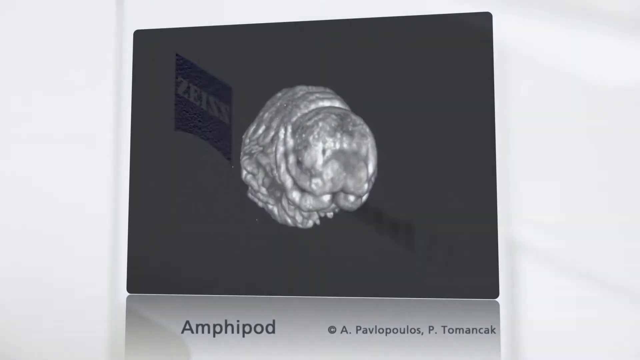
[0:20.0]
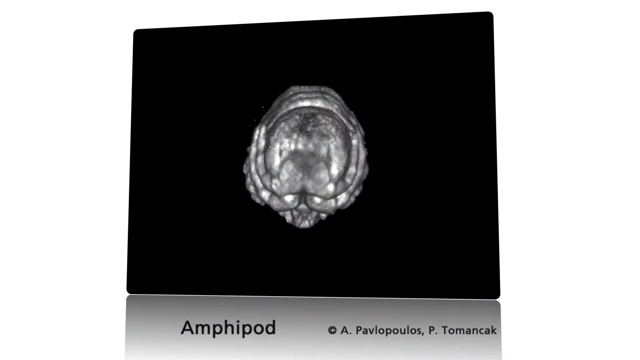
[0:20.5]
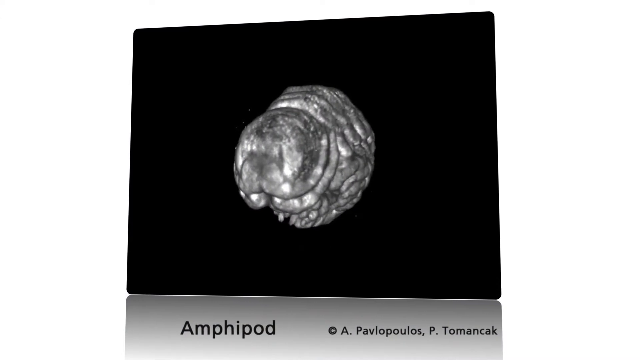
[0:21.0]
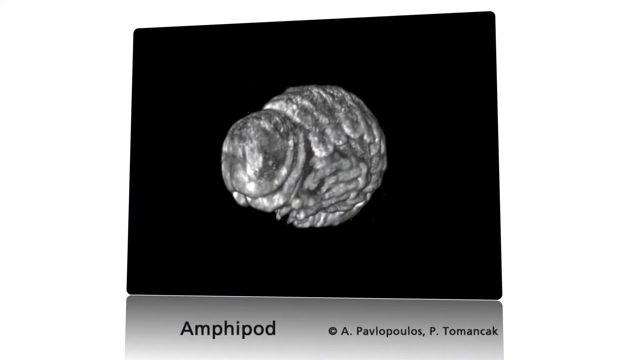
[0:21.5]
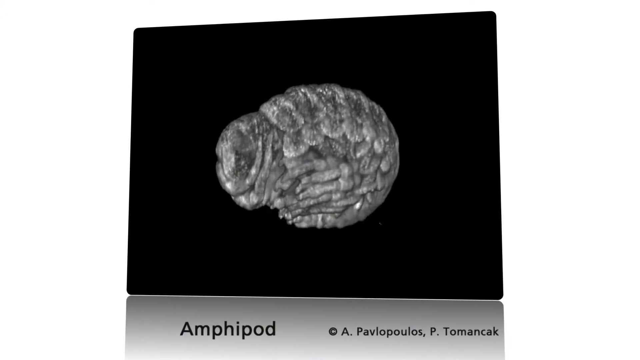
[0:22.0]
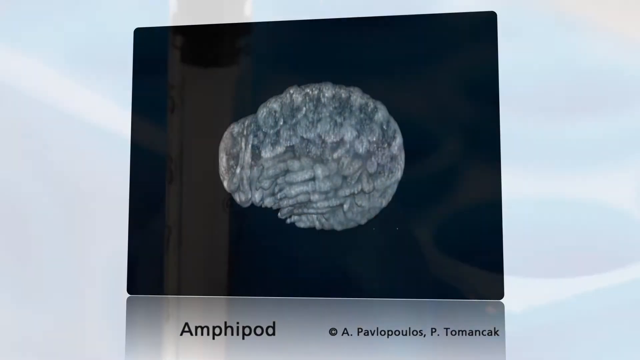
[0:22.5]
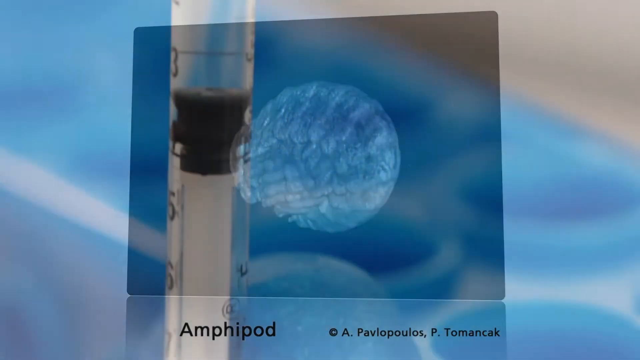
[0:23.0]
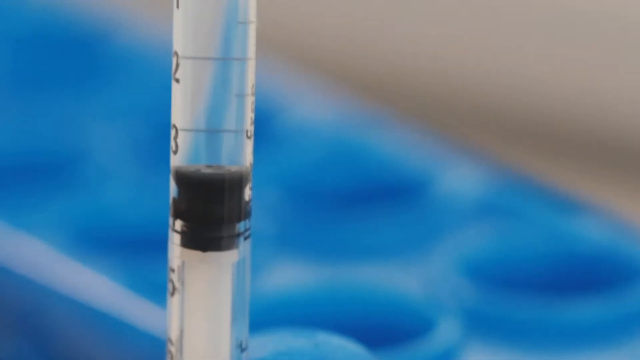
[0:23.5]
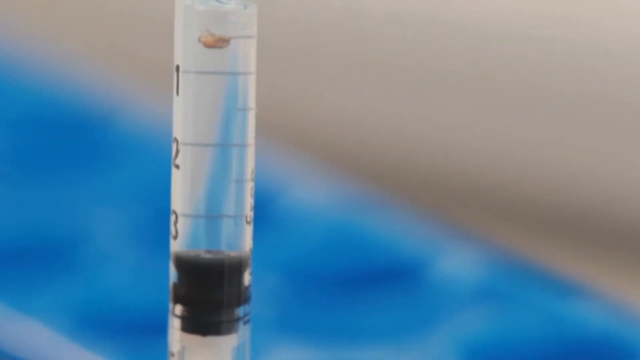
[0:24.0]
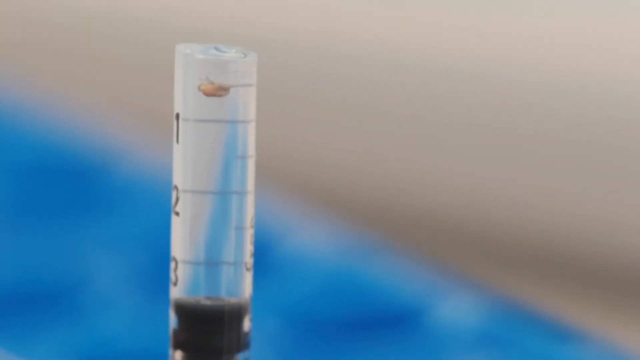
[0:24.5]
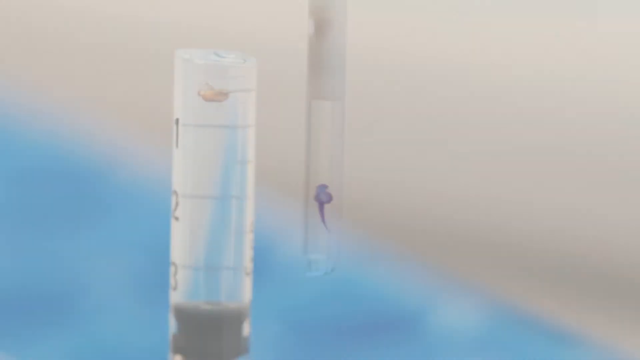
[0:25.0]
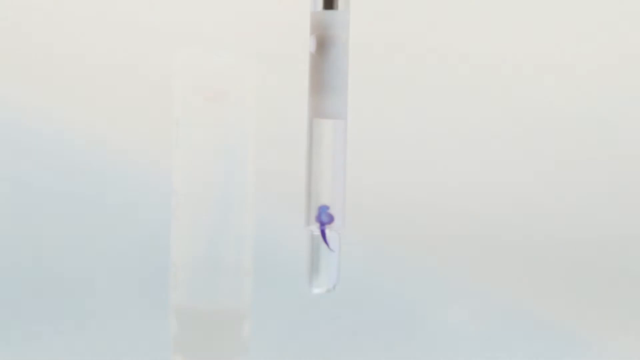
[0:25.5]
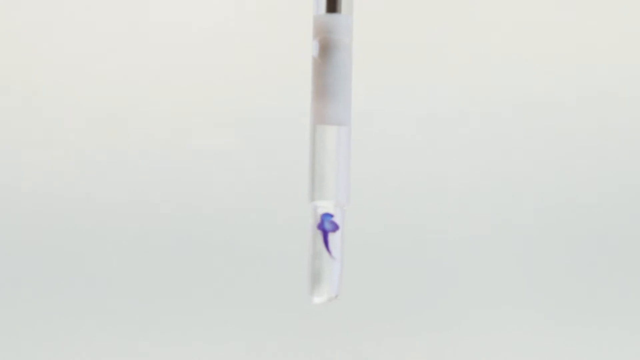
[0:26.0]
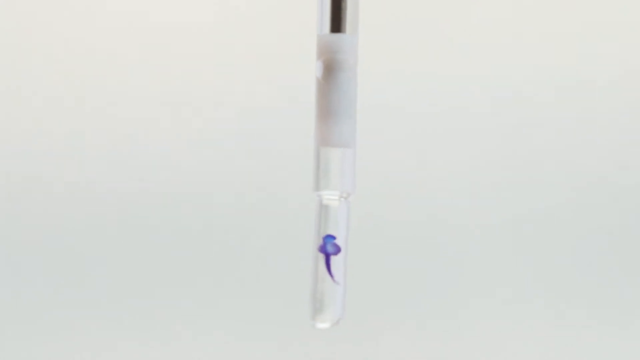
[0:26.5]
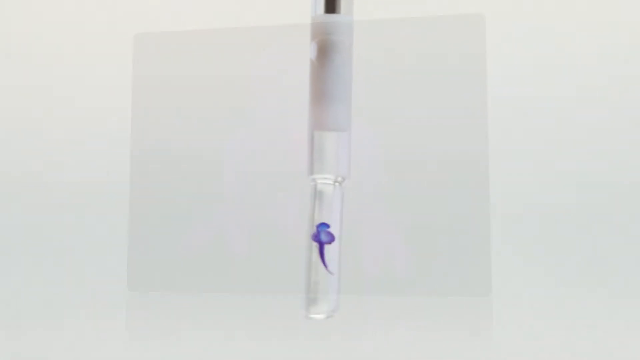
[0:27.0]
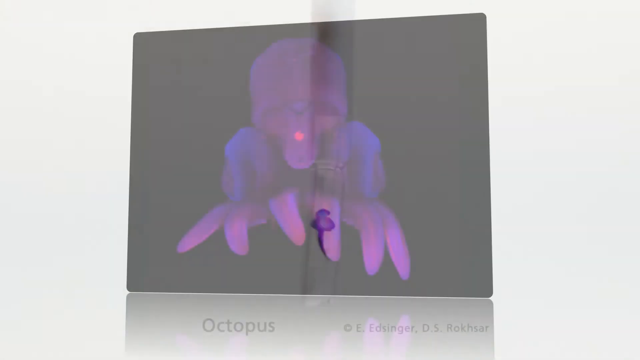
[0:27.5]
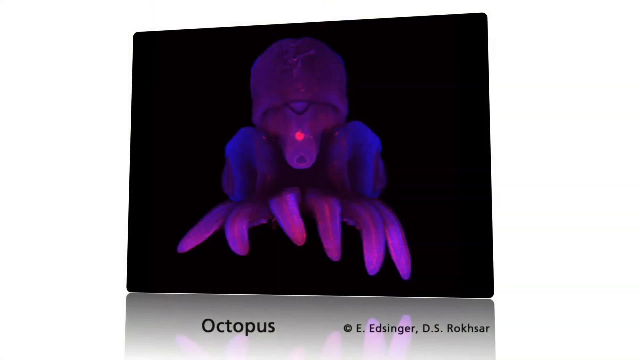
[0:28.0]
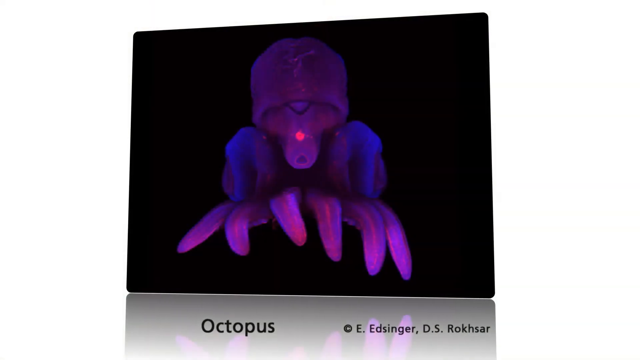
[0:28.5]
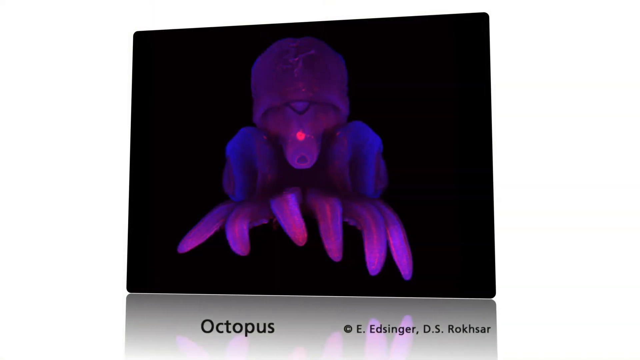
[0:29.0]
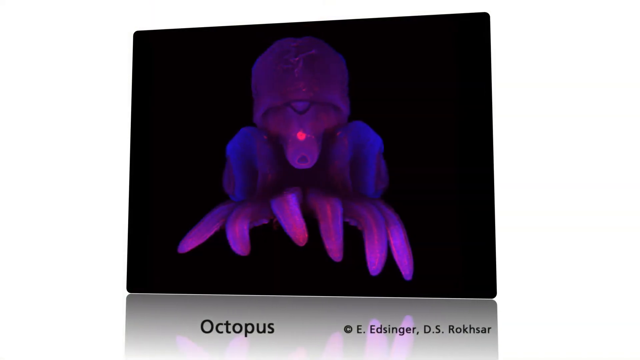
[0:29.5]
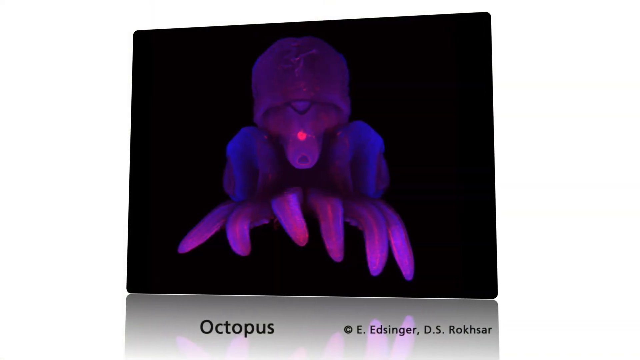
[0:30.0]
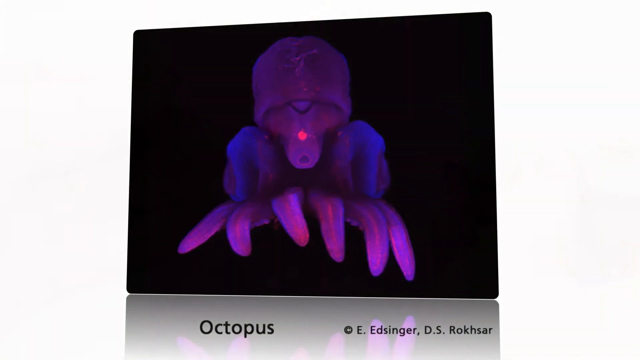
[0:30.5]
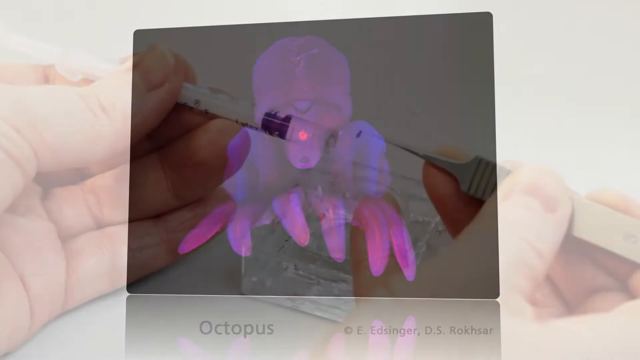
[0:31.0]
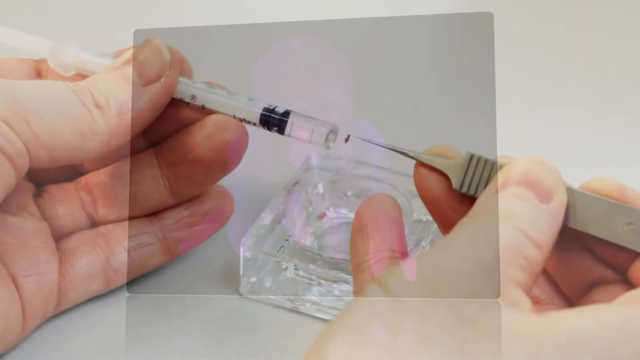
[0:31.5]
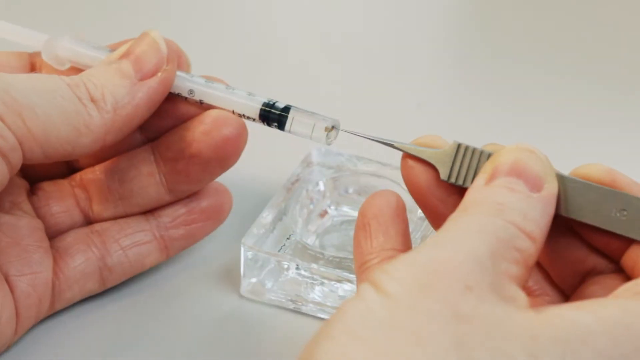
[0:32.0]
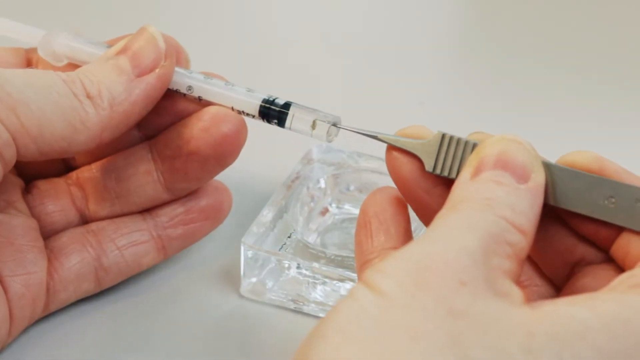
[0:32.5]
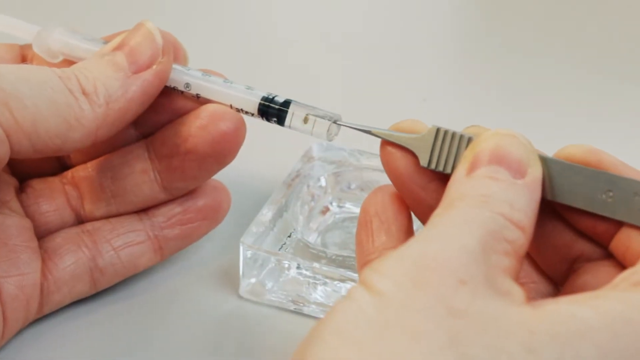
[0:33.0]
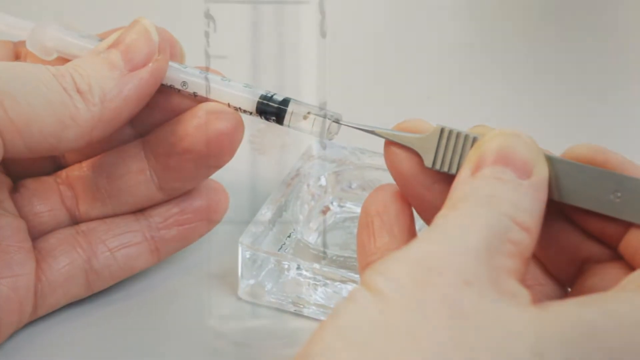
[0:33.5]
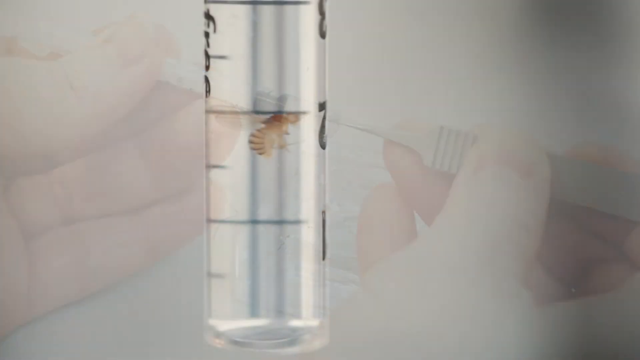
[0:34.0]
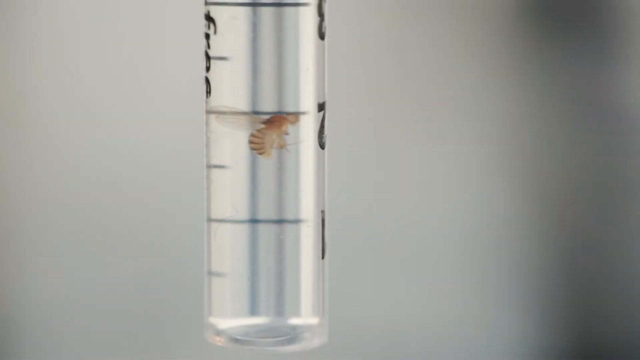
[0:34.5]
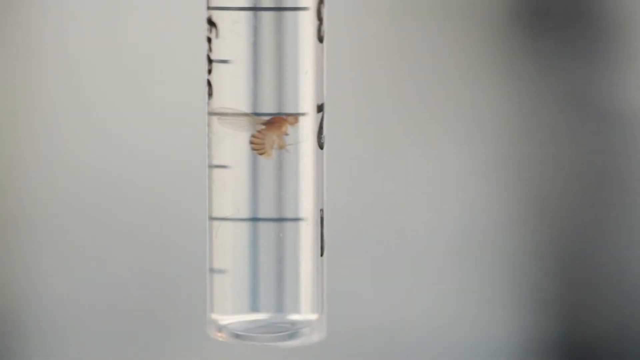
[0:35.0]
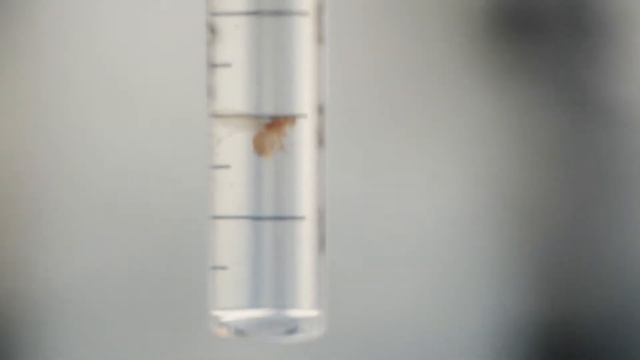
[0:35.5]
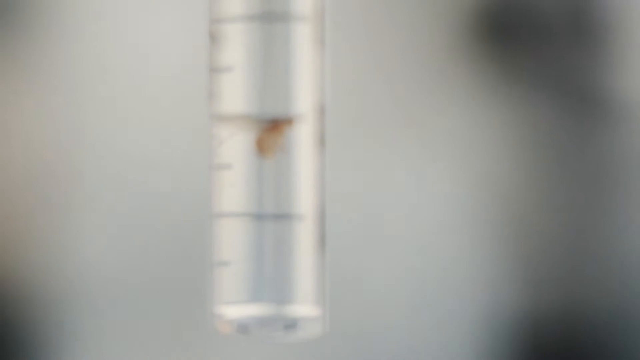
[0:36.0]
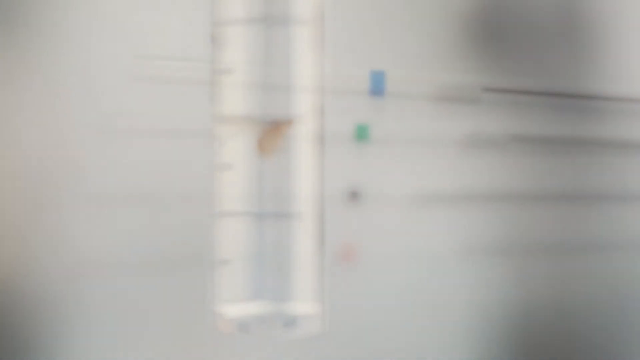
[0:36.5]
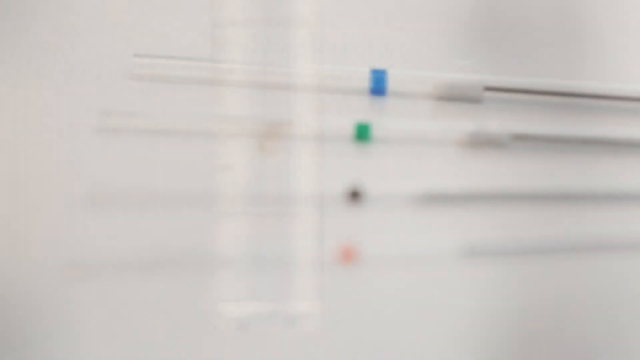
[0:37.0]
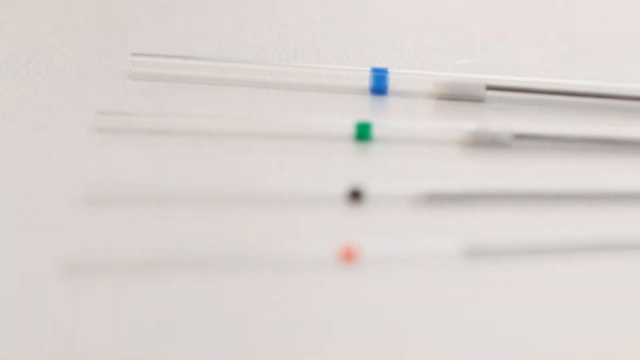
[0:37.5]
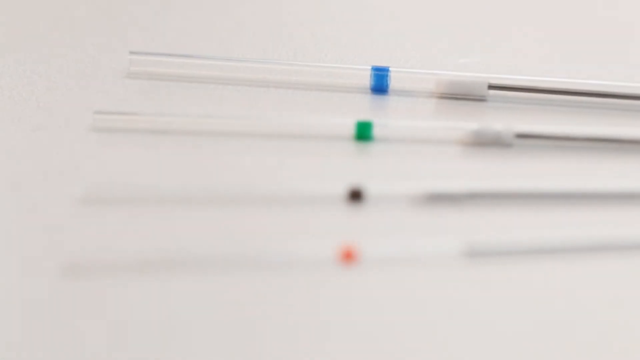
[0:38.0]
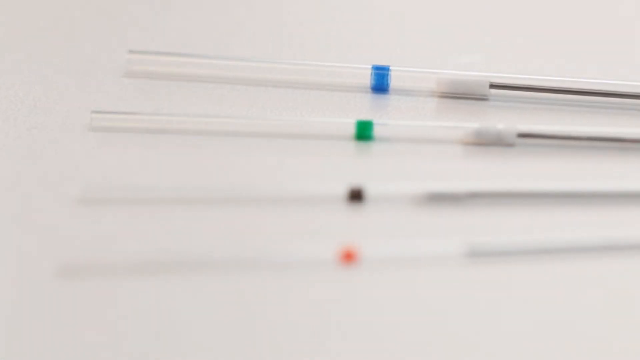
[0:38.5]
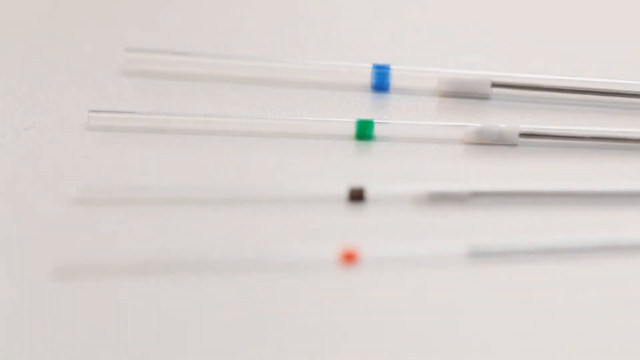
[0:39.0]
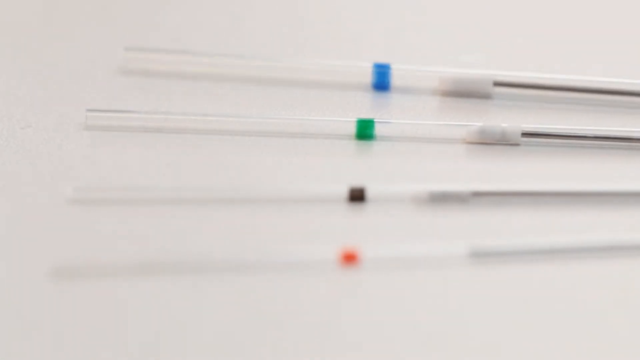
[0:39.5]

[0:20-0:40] On the black background, a whitish-gray circular figure rotates from right to left; it is hard to make out what it is, but it kind of has the shape of a brain. The scene then enters a lab of some sort, with a white table in the background. On the left is a plastic vial marked with the numbers 1, 2 and 3 from top to bottom, and to its right is a thinner tube of some sort. Then everything else disappears and only the tube is shown, in a very zoomed-in view. It has a little purple spot in its center, and at the bottom it is kind of shaking left to right very quickly. The video transitions to a white background with a large black square. In the center of the square is a purple figure that almost has legs, kind of like spider legs, at the bottom; there are six of them. Above them is an oval-shaped blue and purple part, and above that, in the center, is a more purple part almost like a head shape, with a red dot in its center. The view stays on this for a few seconds. Back in the lab, someone's left hand holds a clear, long, thin tube with a black stripe at the top. Their right hand holds what looks to be an item with a flat metal look where it is held and what looks to be a needle of some sort at the very end. They very carefully place the needle into the tube. Underneath, there is what almost looks like a glass ashtray of some sort. A close-up shows the tube standing vertical, with parallel lines on it, three long and three short, almost like a ruler, and apparently the numbers one, two and three barely visible in black, with one at the bottom and three at the top. The view zooms out slightly and fades away. Then a white table holds four long, clear, slim tubes, each with a colored stripe in its center: from the top, blue, then green, brown and red. Each tube further down is more out of focus.